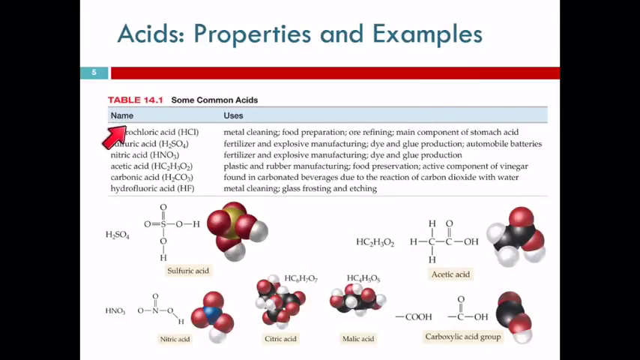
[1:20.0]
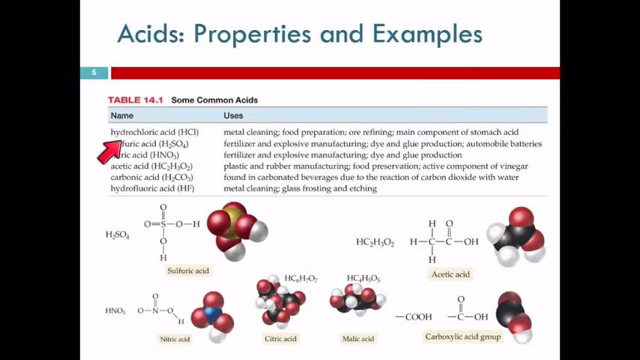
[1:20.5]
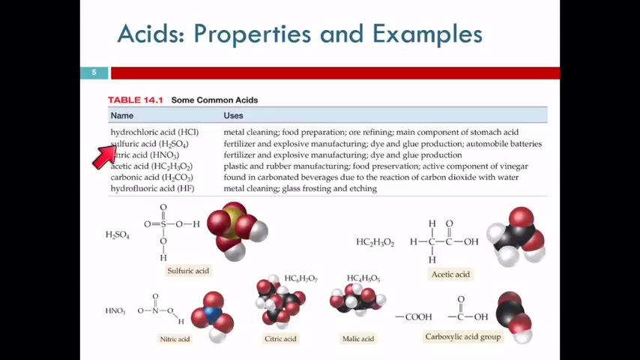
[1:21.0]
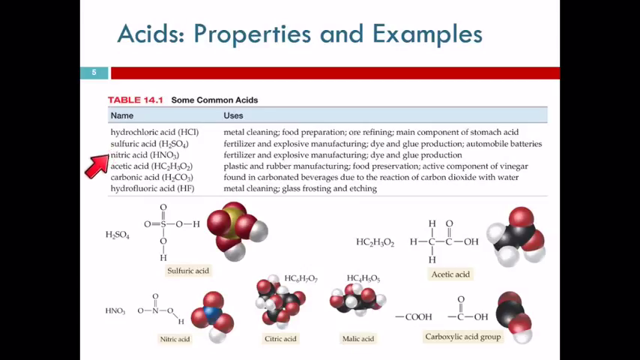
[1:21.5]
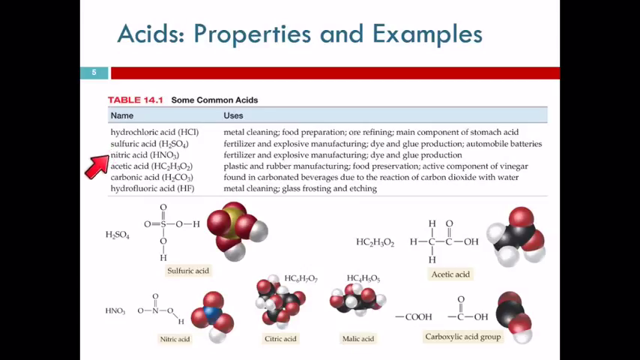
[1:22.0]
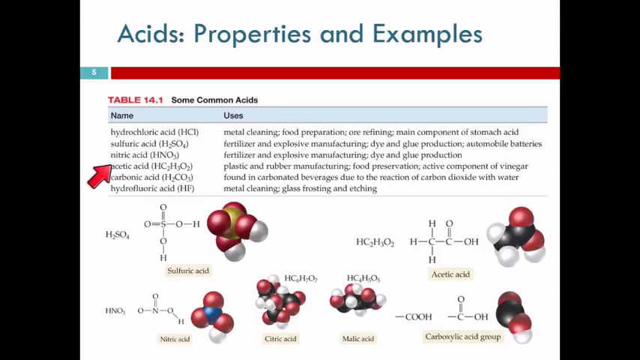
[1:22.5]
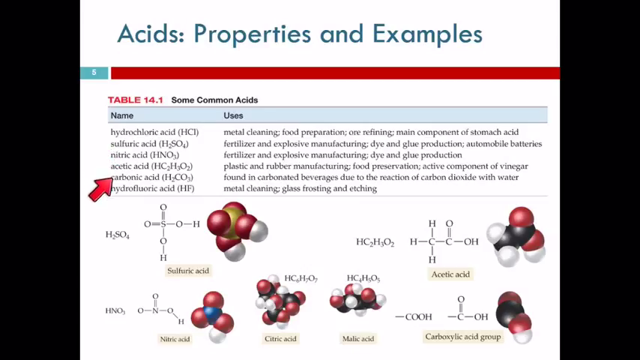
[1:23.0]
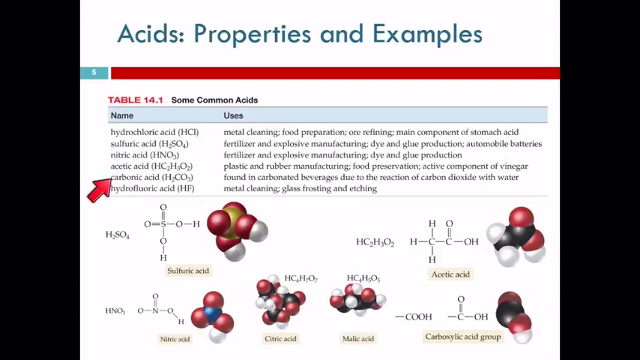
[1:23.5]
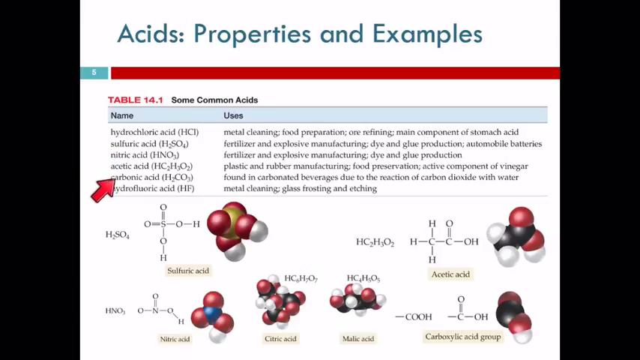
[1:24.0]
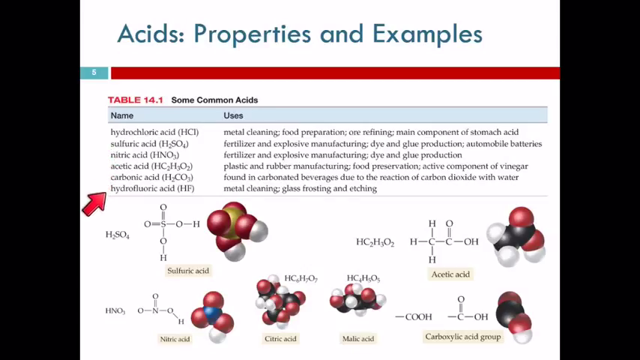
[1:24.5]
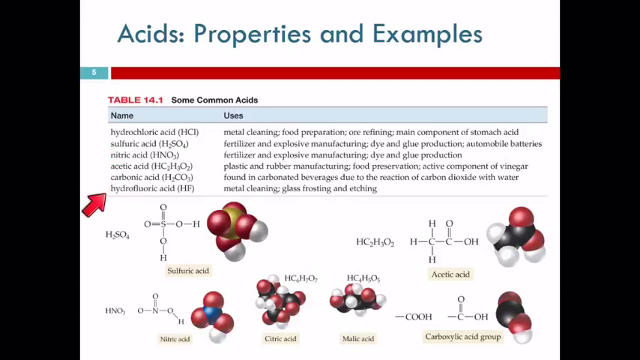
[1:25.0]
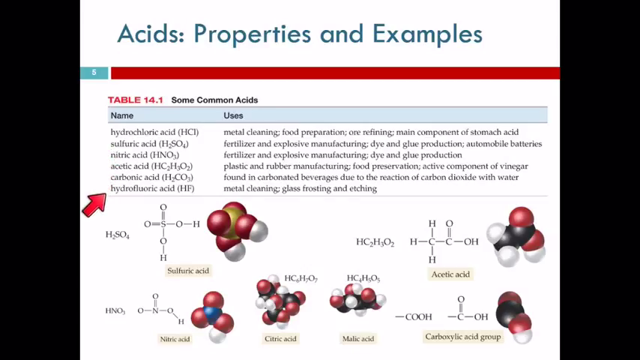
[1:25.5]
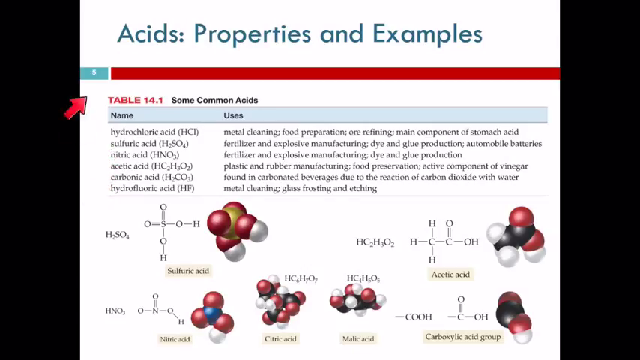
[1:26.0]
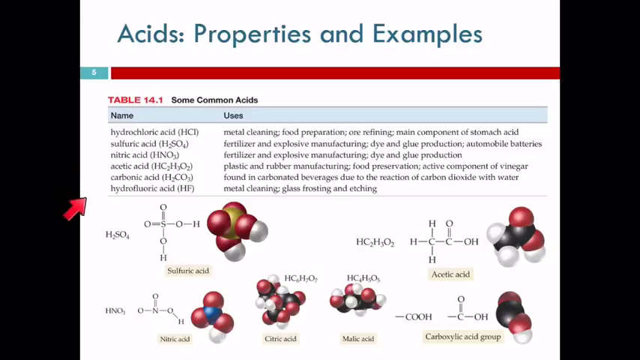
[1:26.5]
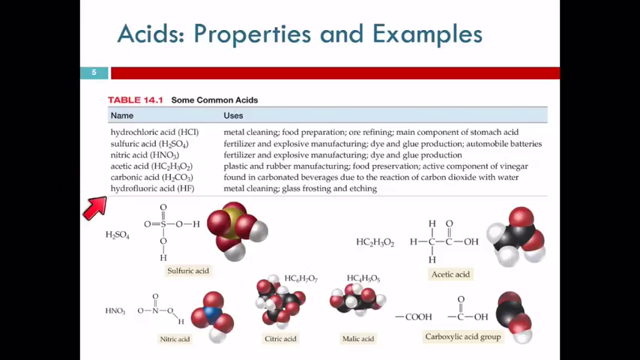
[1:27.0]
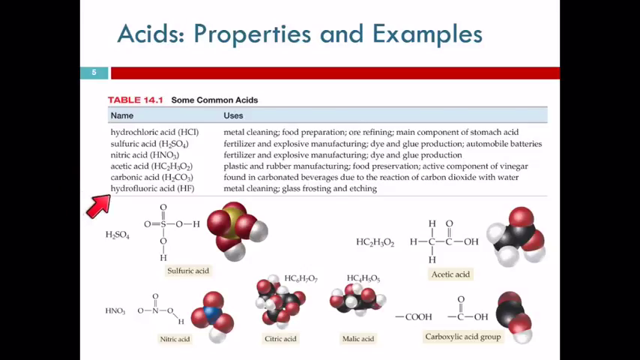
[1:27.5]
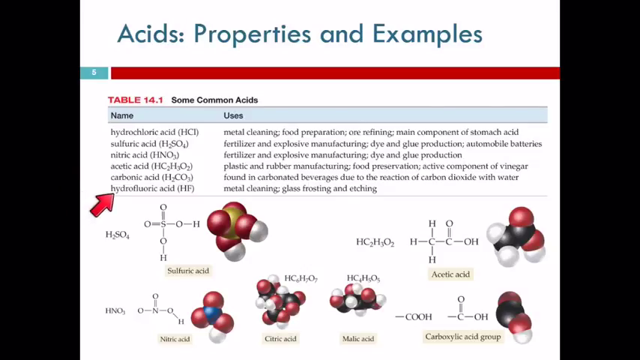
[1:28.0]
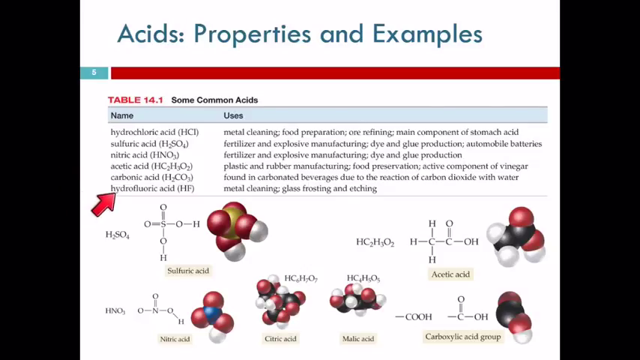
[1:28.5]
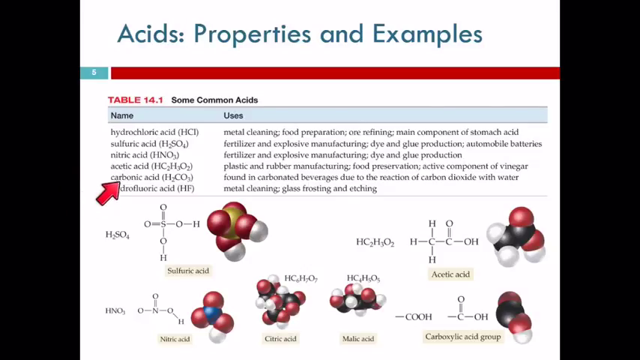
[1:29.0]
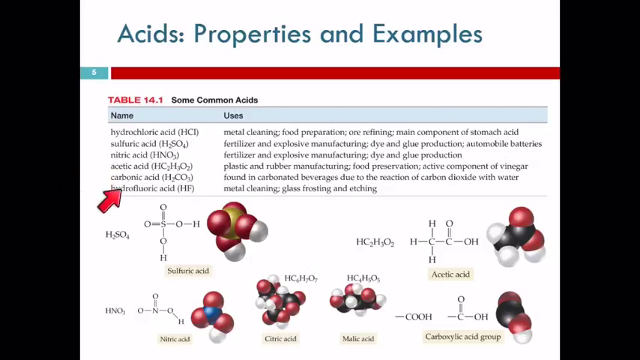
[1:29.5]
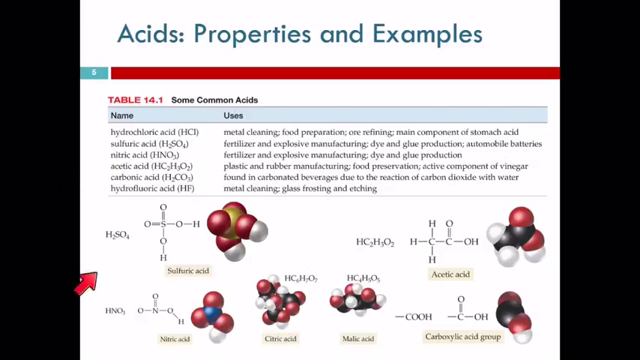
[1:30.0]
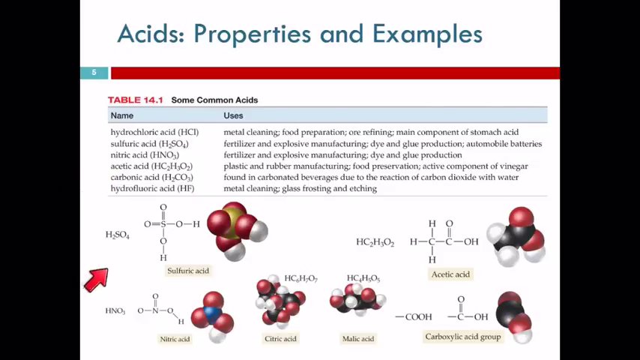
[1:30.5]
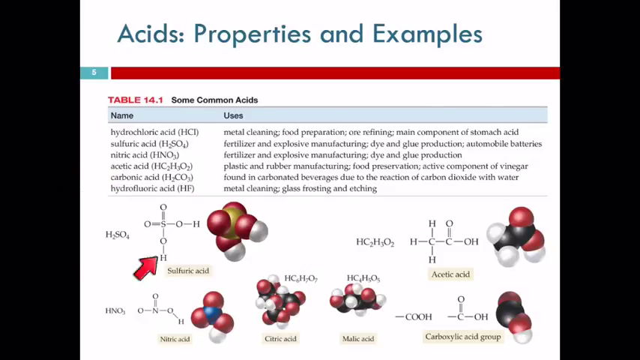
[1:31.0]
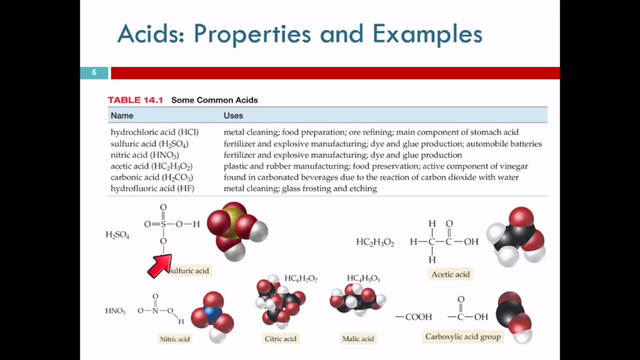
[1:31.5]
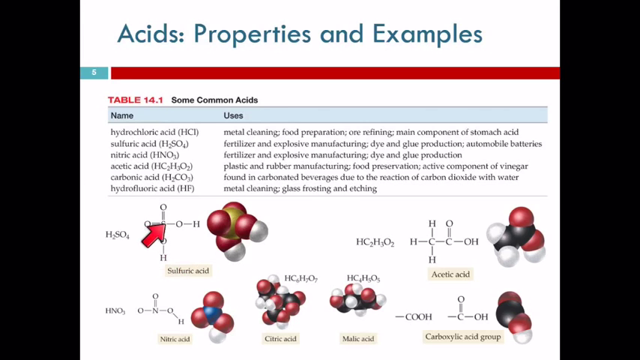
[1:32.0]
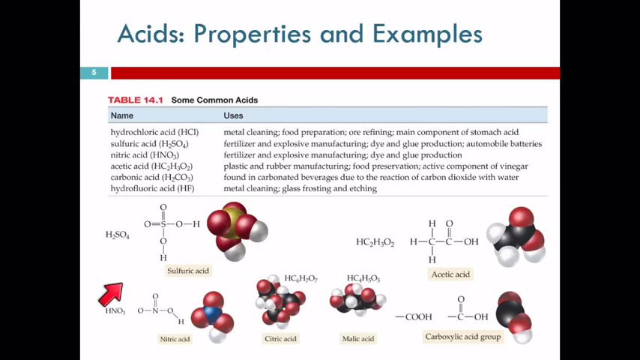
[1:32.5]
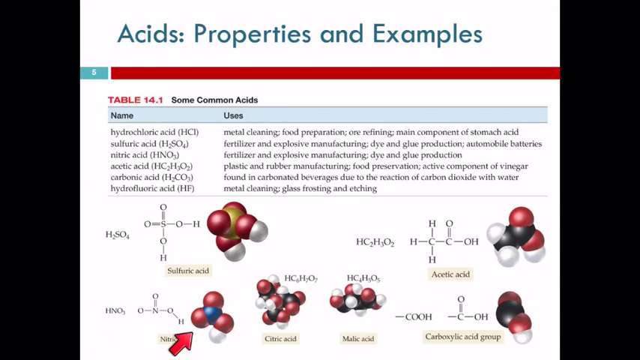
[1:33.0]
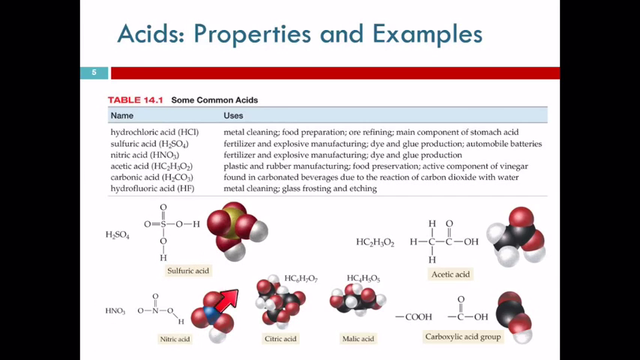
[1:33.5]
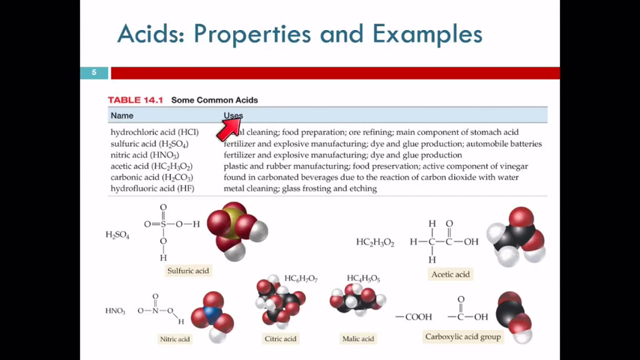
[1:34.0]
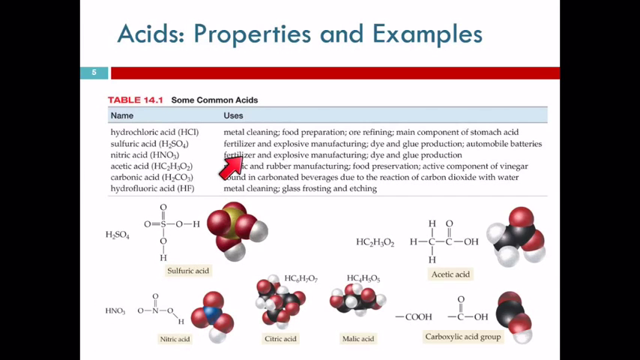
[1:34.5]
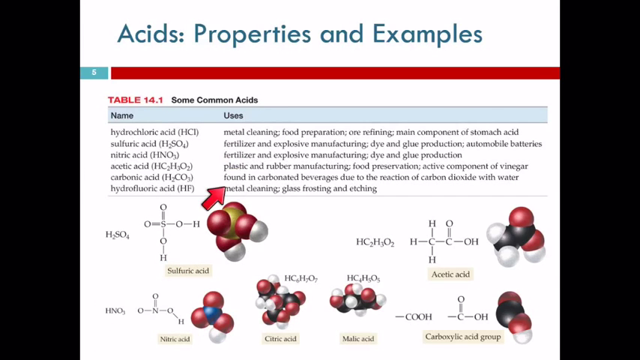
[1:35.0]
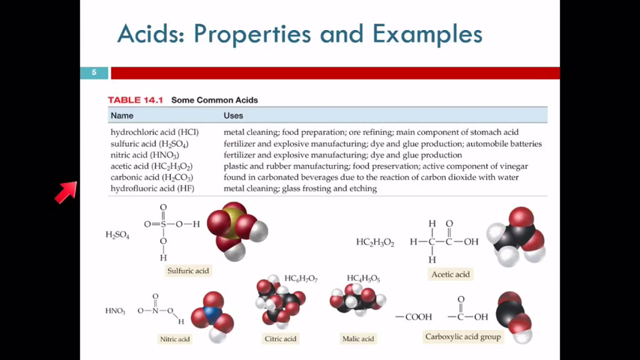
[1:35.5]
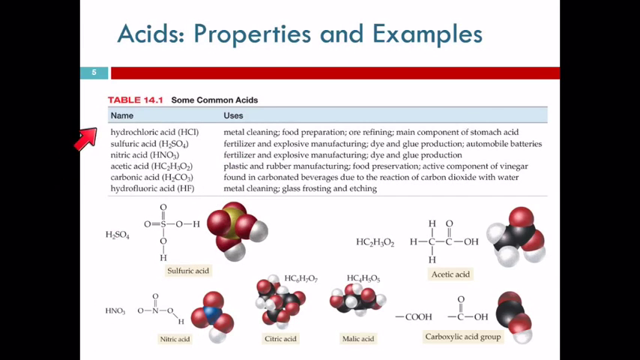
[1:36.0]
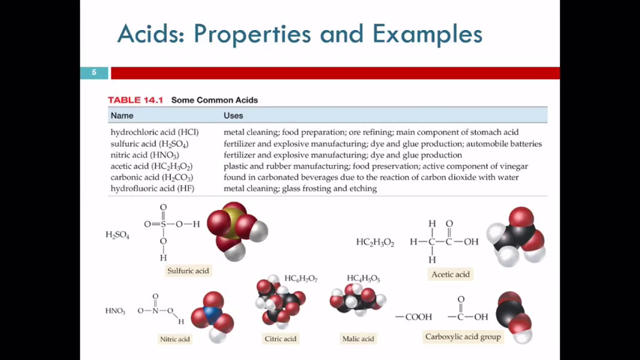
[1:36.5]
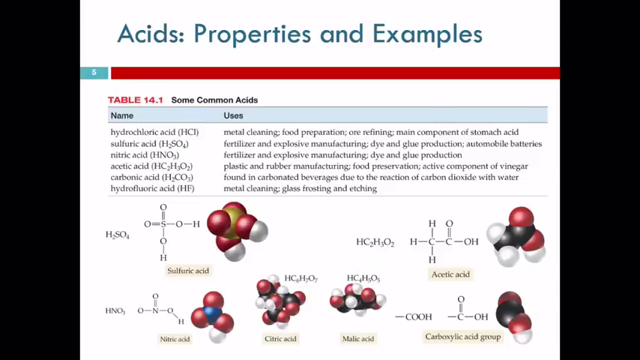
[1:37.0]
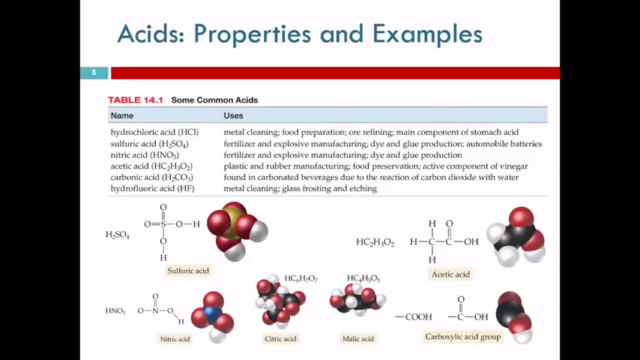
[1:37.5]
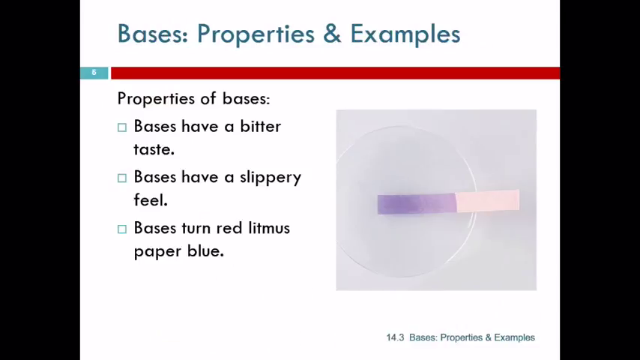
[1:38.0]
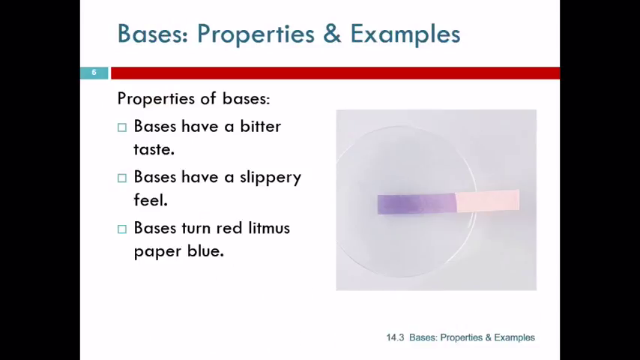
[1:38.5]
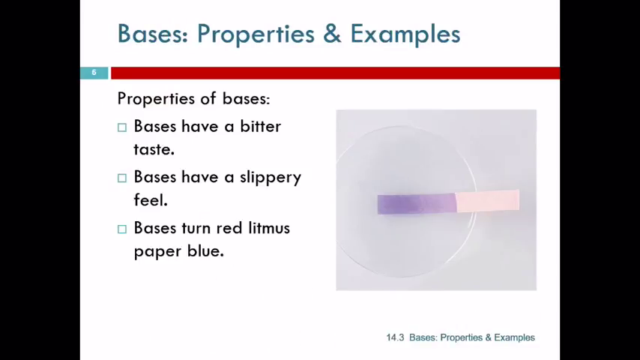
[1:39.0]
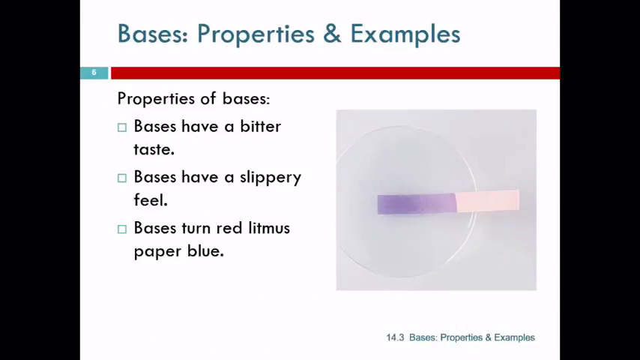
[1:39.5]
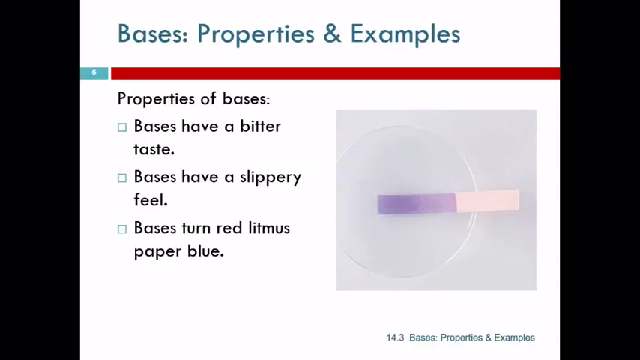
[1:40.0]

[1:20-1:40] Another table has columns labeled "name" and "uses"; the name column lists types of acid and the uses column explains the uses of each acid. At the bottom are diagrams that look like molecules colored red, gold, and white, and on the left side molecules colored red, black, and white. On the left side there is an explanation about sulfuric acid, and on the right side another type of acid. The view then moves to the next page, where "bases properties and examples" is written in blue. On the right side is an image of a circle that looks like water, with a strip stretching from the center to the left; the strip is purple up to halfway and looks pinkish on the other half. The background is white.